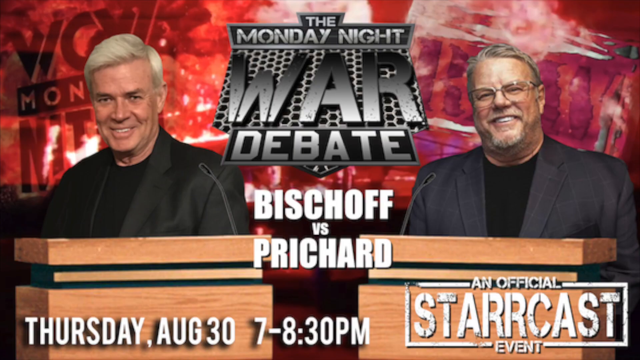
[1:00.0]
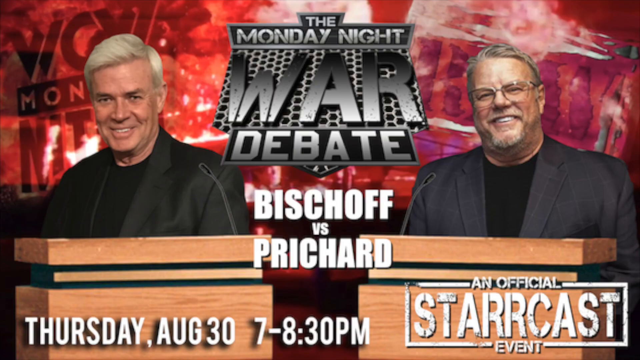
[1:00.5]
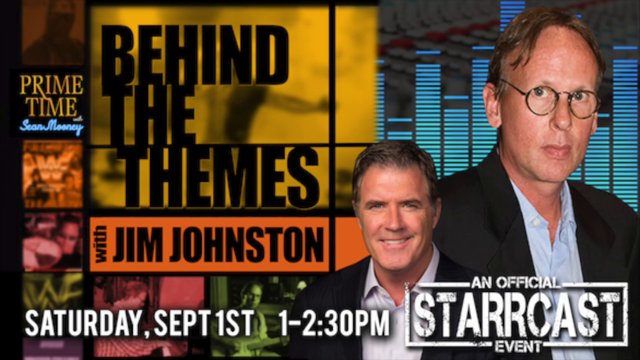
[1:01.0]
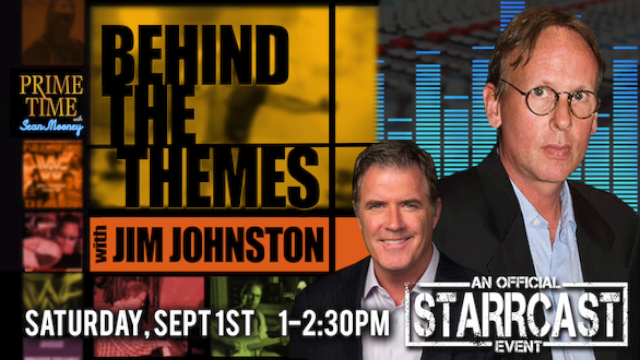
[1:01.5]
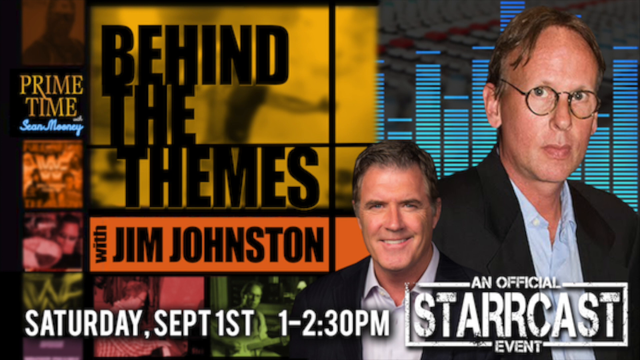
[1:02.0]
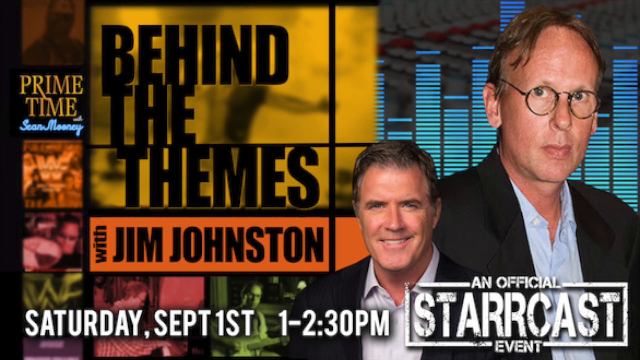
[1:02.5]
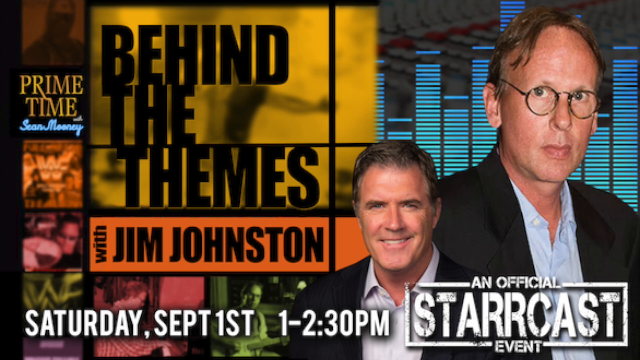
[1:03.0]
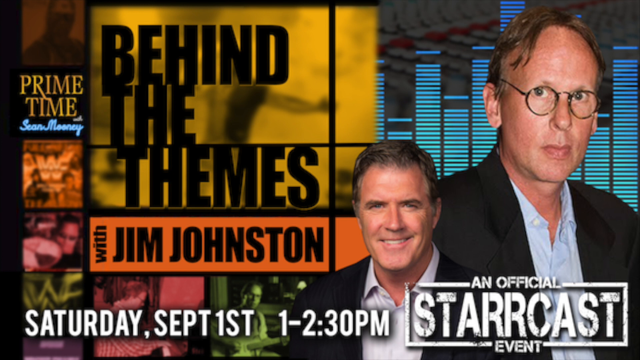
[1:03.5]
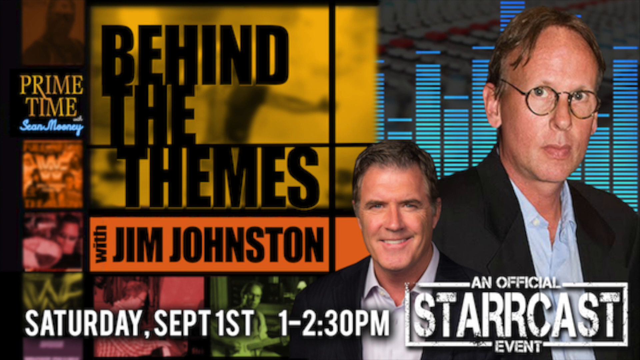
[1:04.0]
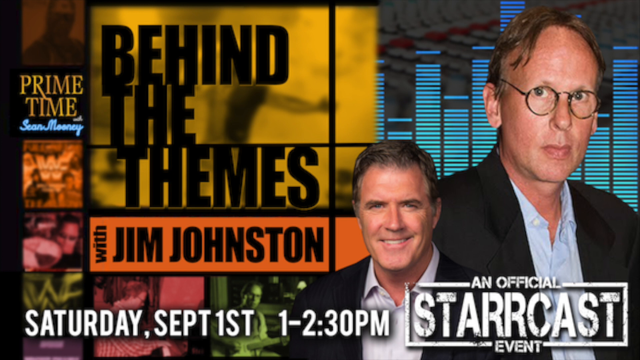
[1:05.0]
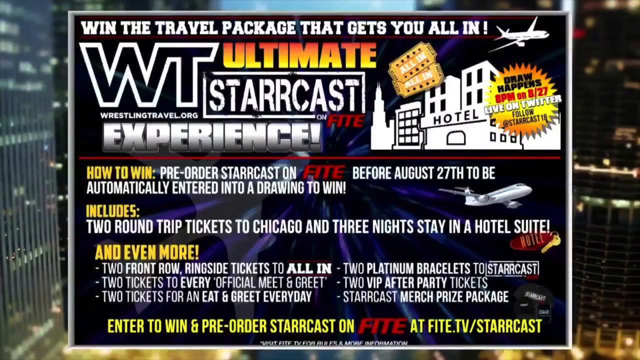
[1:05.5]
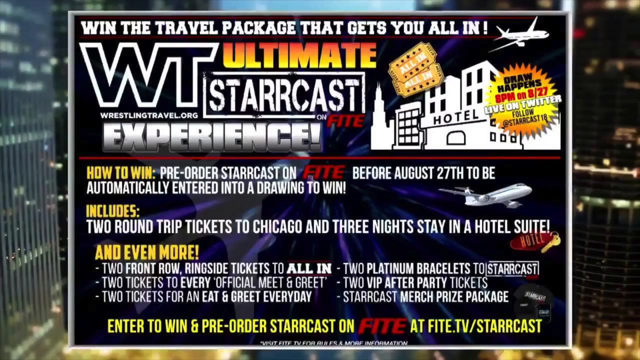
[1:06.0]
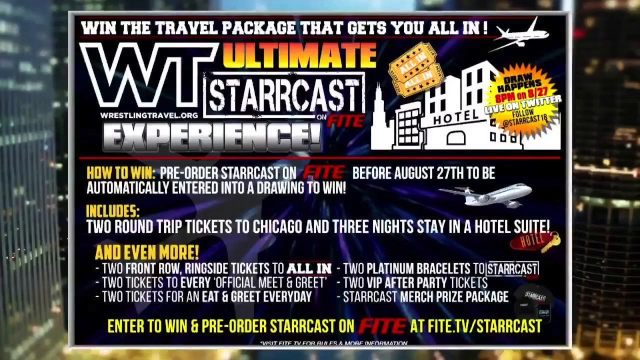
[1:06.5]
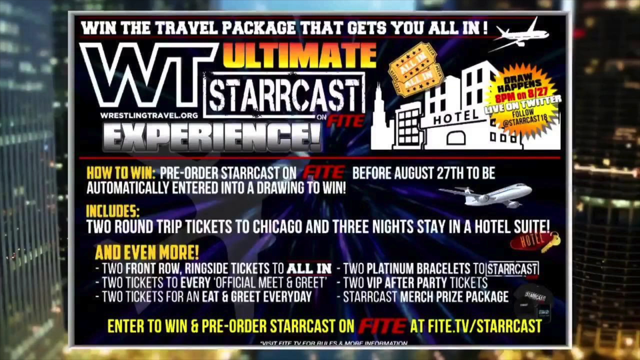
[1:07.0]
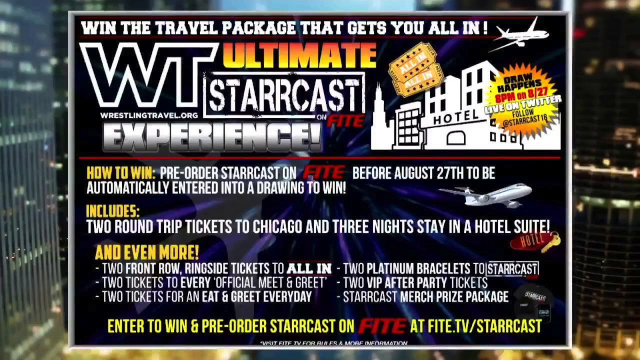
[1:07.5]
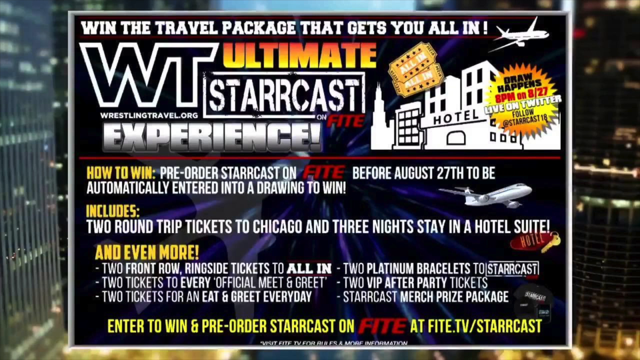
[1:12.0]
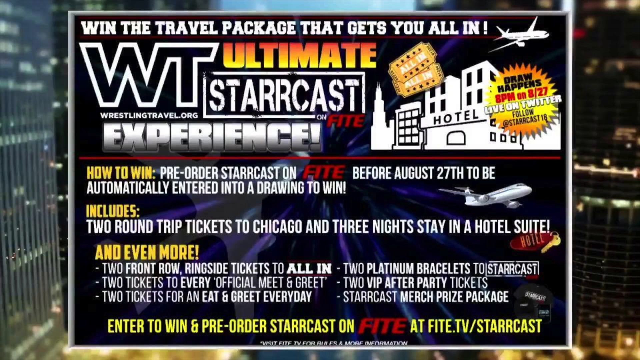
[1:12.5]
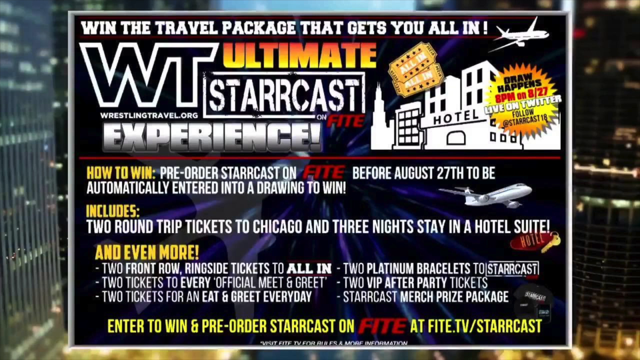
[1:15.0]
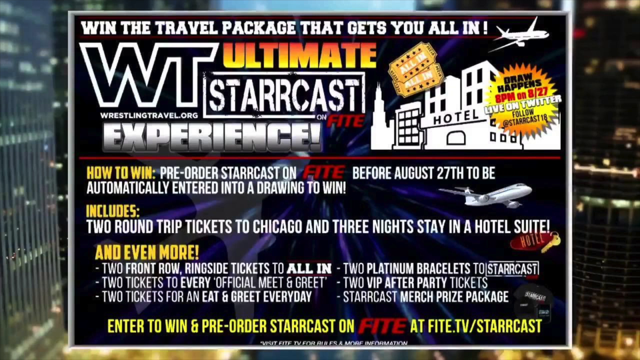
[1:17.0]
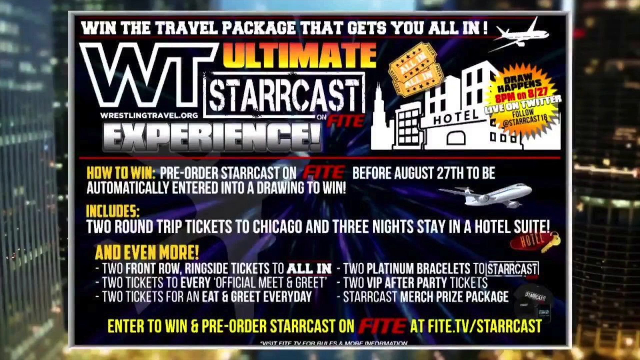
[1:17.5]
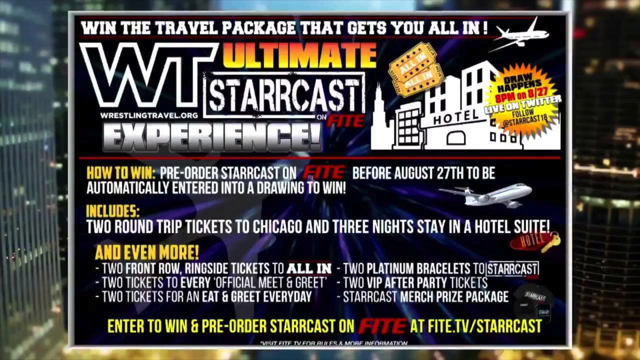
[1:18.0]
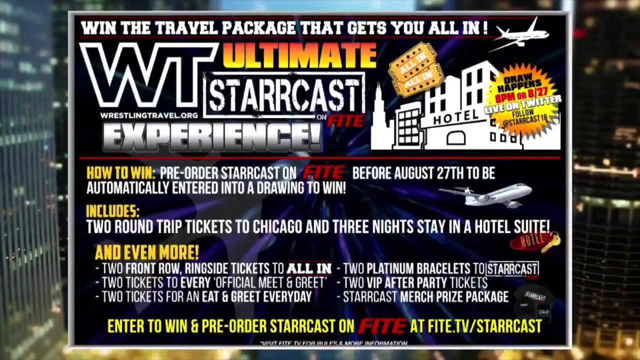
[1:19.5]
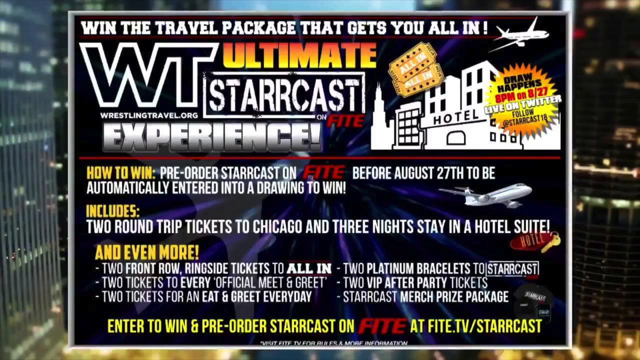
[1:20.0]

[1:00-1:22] An advertisement for shows appears. First is "the Monday night war debate" Bishkoff versus Prashad, from 7-8:30pm on Thursday, Aug 30th, showing two men at a podium who are smiling. Next is another show, "behind the scenes with Jim Johnson", on Saturday, Sept 1st, from 1-2:30pm, with the text "an official star cast". Another advertisement shows "experience" in silver in the middle, along with a hotel with a plane flying over it. It reads "WT ultimate starcast" and "includes two round trip tickets to all in", and lists further items such as two front row ringside tickets, two platinum bracelets and a few other things. The advertisement appears to be set on a backdrop of two skyscrapers and is very wordy and cluttered.